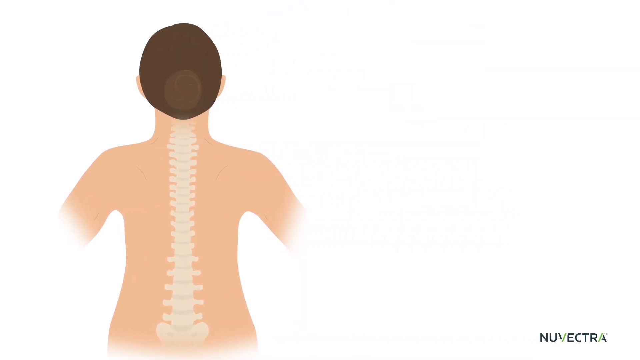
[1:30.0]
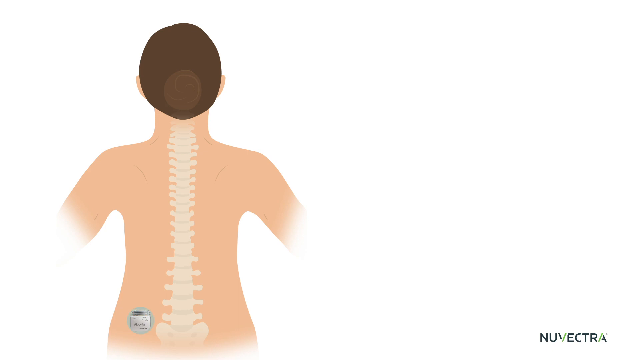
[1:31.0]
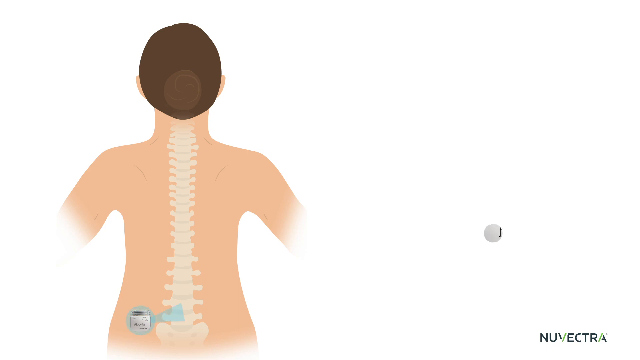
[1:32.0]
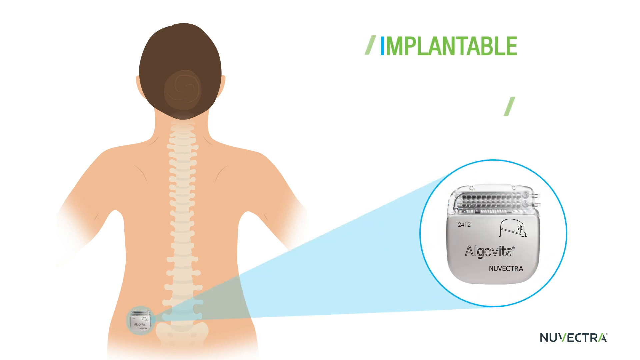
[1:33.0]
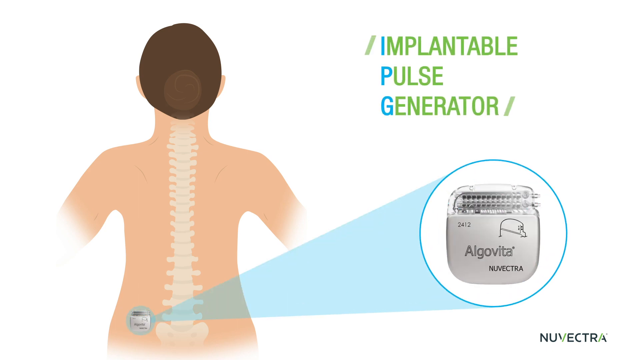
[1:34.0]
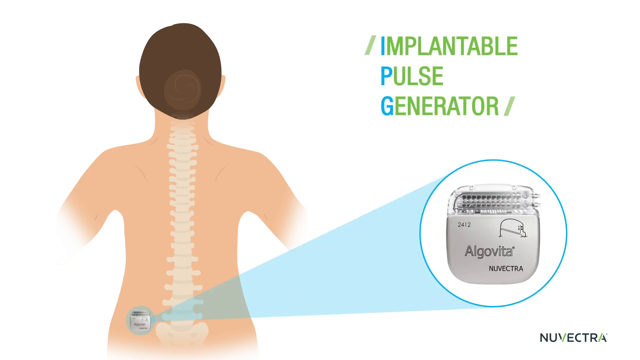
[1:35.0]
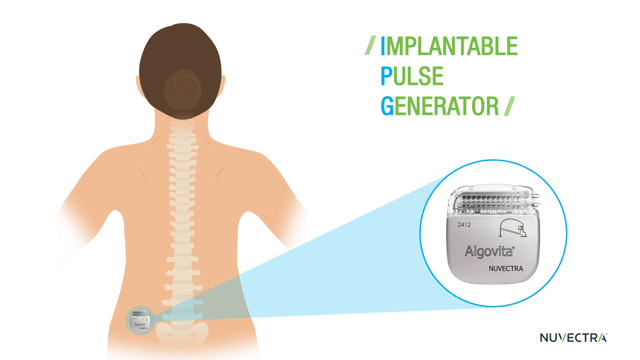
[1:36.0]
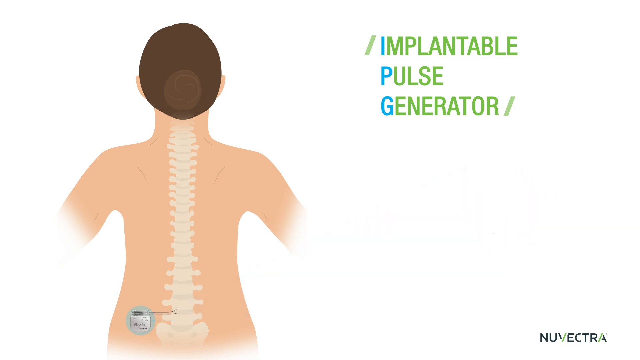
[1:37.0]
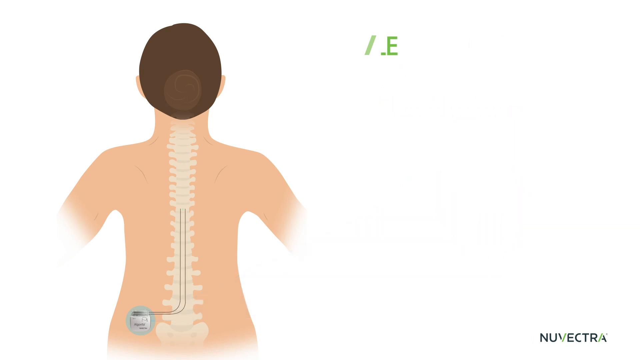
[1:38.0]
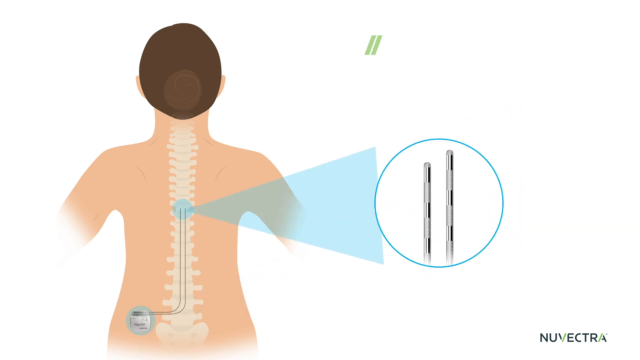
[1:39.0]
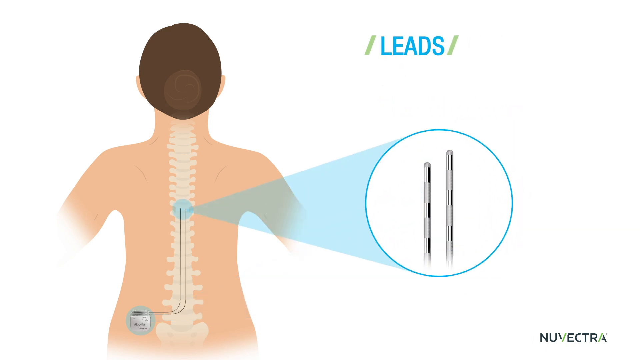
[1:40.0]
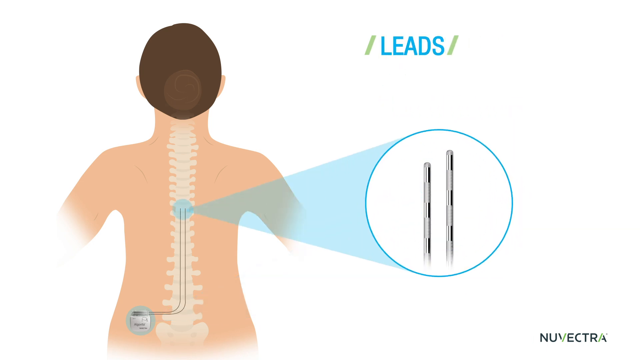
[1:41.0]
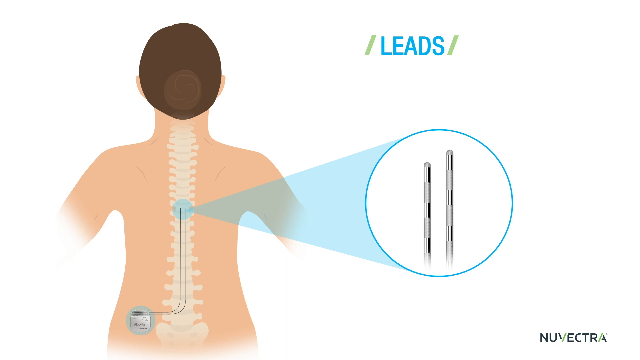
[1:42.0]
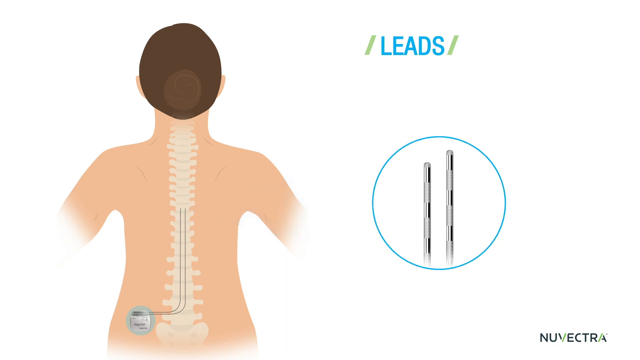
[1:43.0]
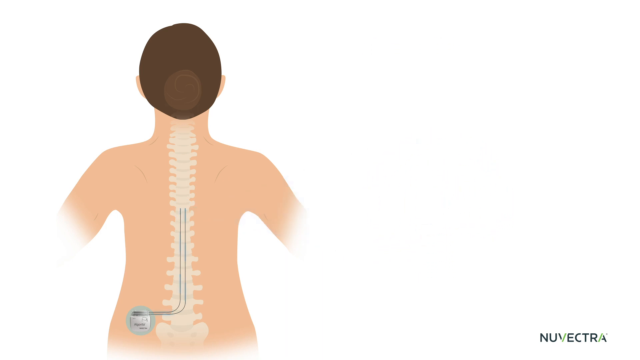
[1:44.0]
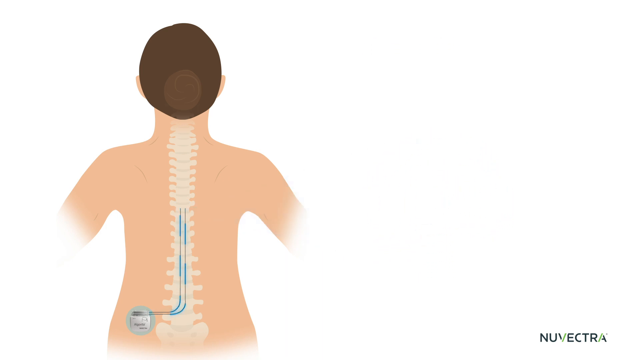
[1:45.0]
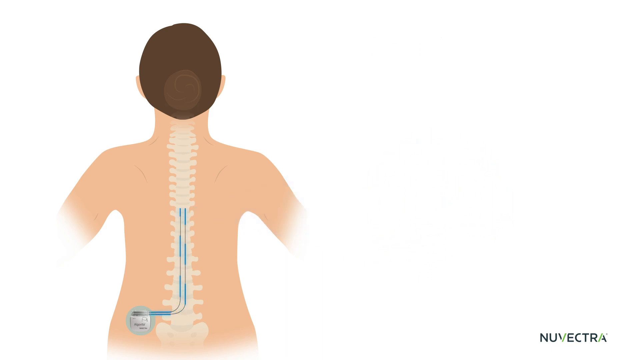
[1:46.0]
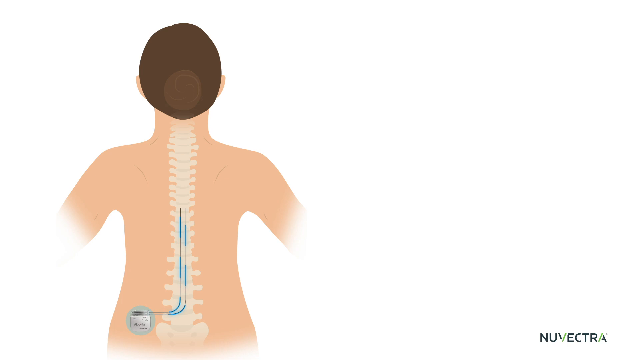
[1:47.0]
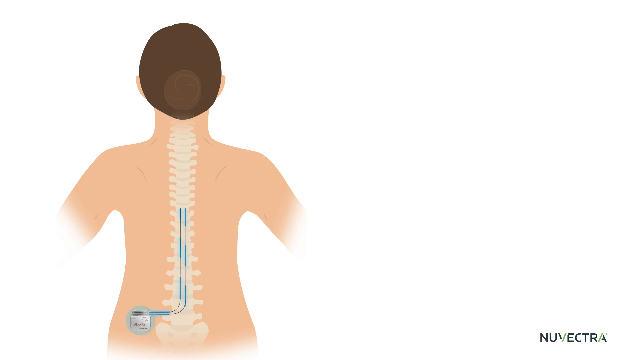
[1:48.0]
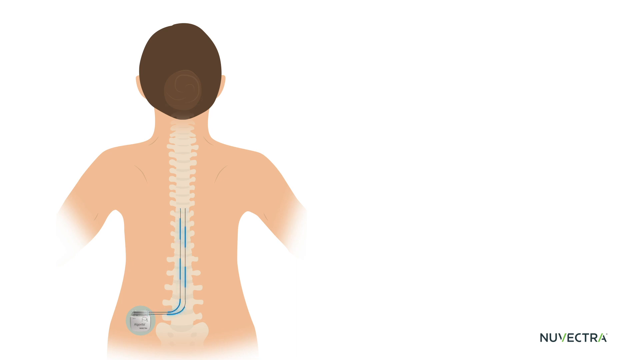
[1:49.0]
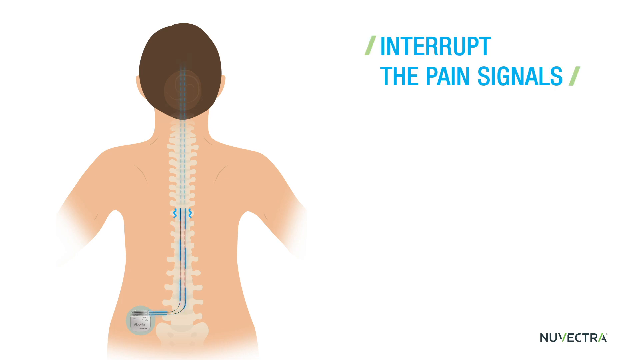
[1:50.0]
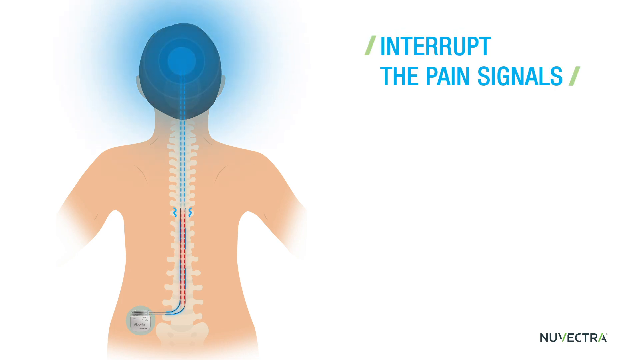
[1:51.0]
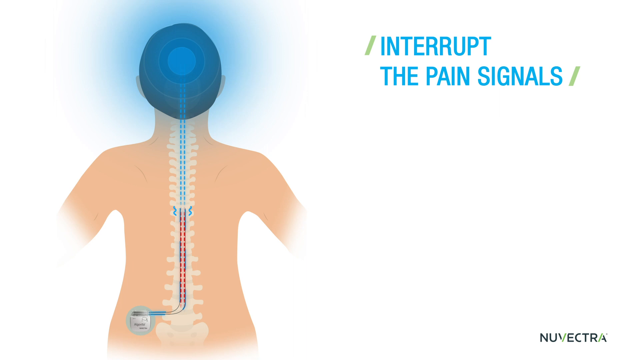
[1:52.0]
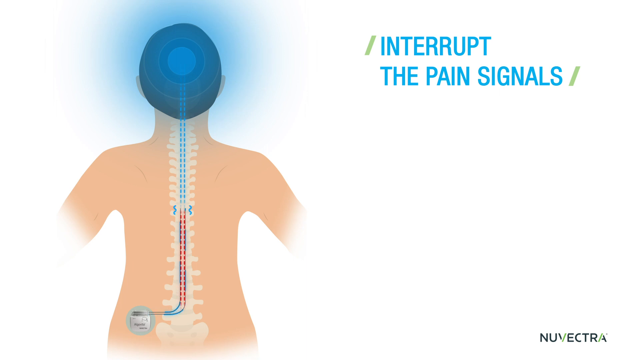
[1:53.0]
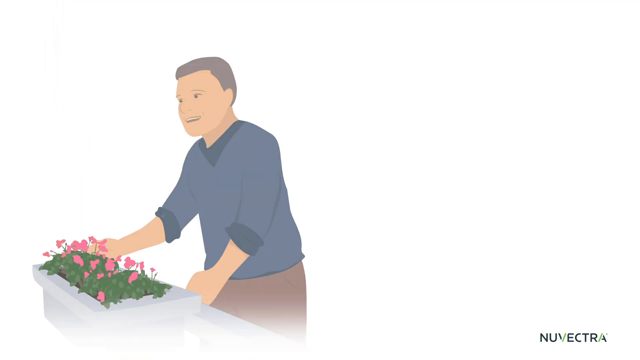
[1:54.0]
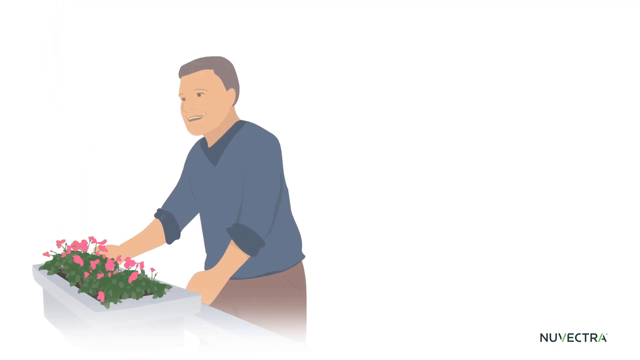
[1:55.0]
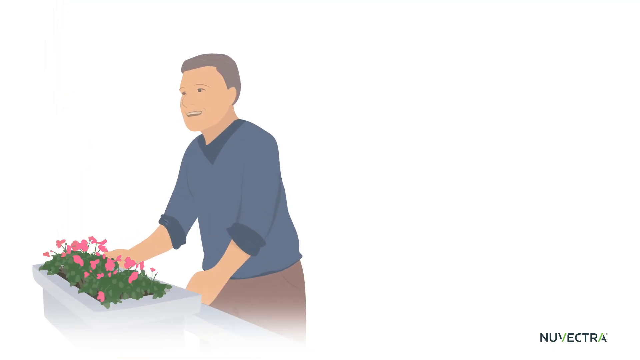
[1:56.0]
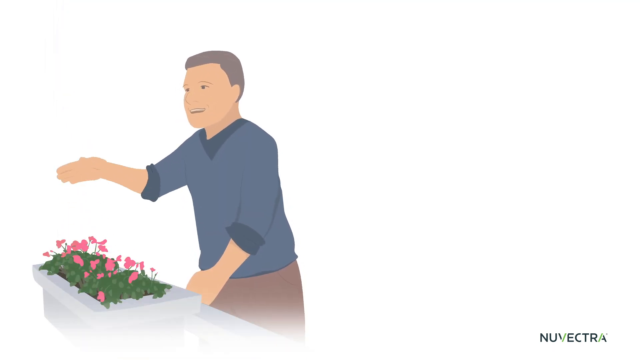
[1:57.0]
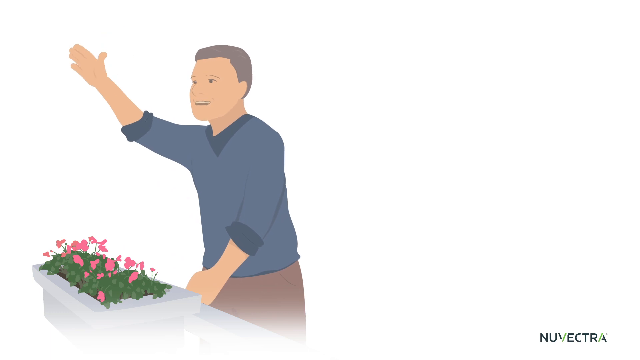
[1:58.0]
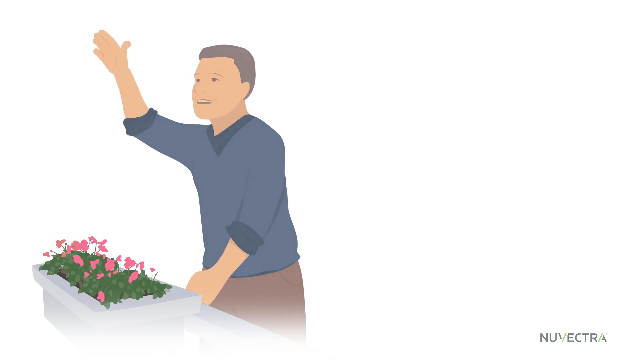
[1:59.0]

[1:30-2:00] The diagram continues, and on the right-hand side there is a silver device with the brand name "Nevectra"; the device is also located on the human diagram toward the bottom left of the spine. Above, green text beginning with a blue character reads "implantable pulse generator." The lines are removed from the person's spine, and the back of the head has no light around it. A light blue holographic circle and light blue projected light appear, and a circle on the right-hand side shows two silver rods, with "leads" written above it. On the diagram, blue lines start at the device and shoot about halfway up the person's spine, text reads "interrupt the pain signals," and light blue light appears on the person's head again. The same animated person from earlier appears with the garden bed, now smiling, with the right hand on the edge of the garden bed, and raises the right hand in the air and waves.